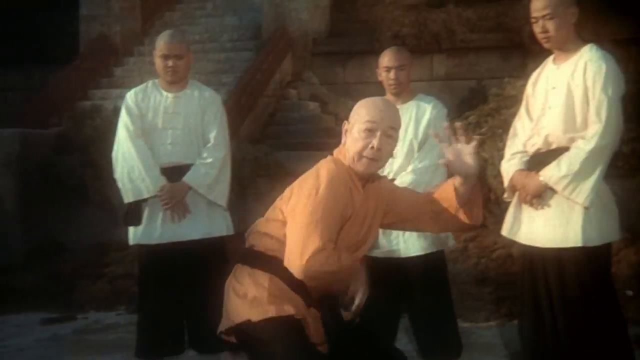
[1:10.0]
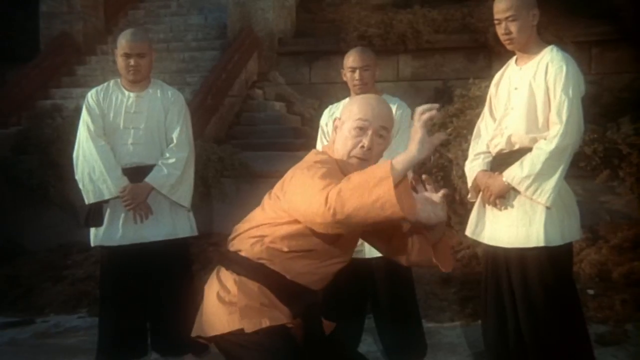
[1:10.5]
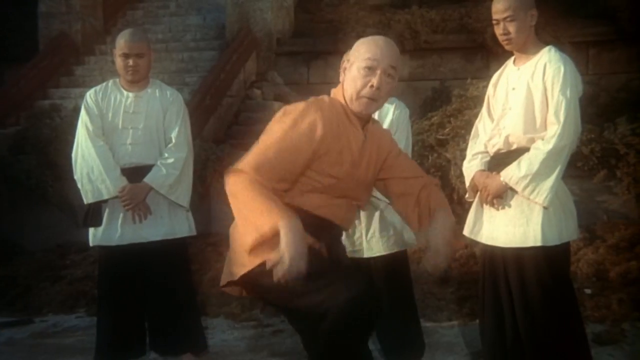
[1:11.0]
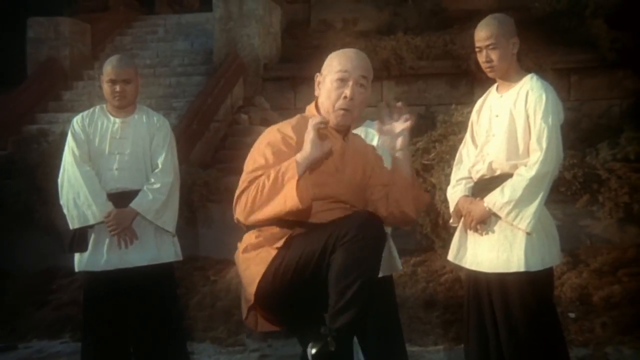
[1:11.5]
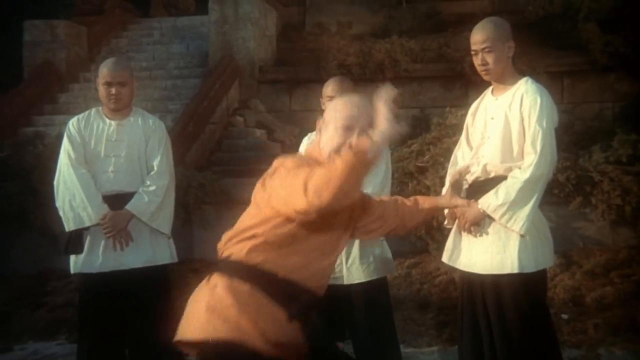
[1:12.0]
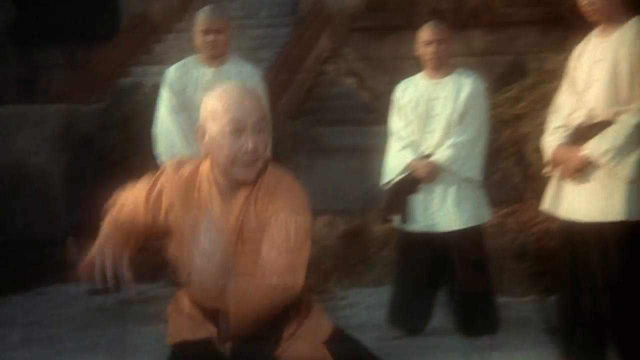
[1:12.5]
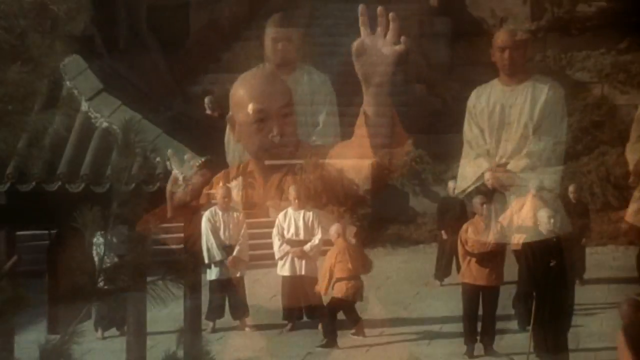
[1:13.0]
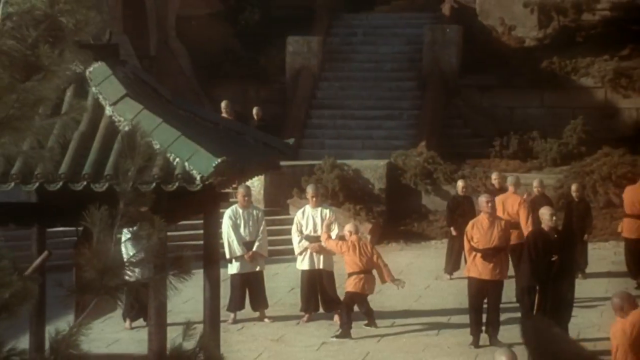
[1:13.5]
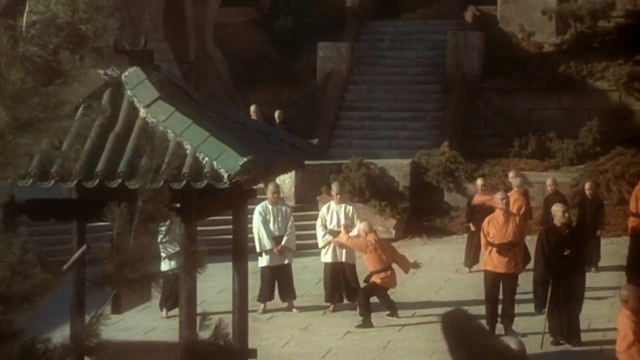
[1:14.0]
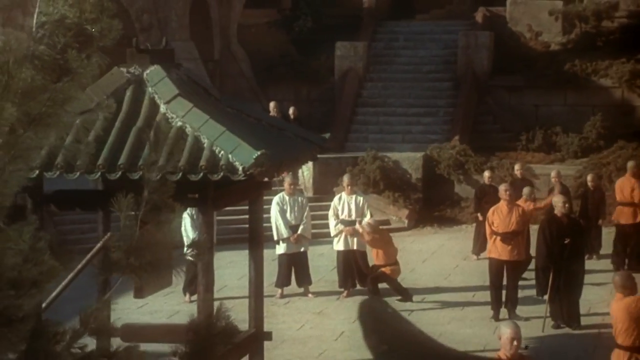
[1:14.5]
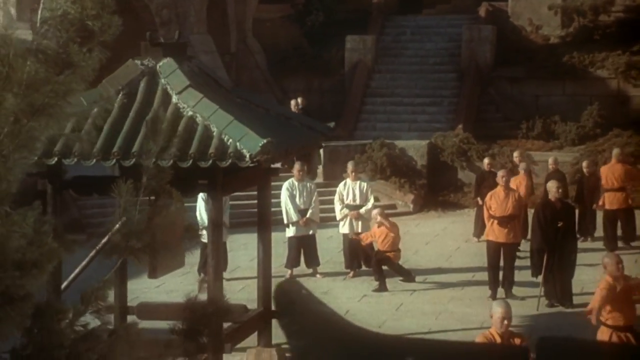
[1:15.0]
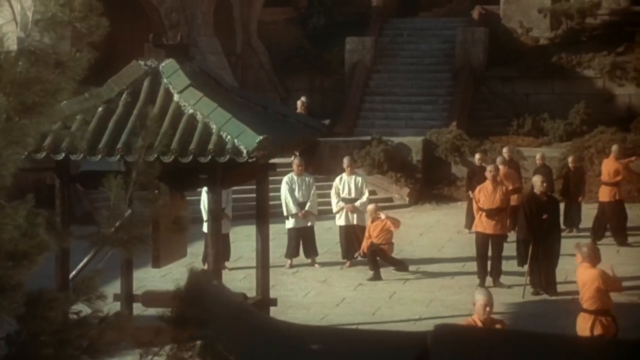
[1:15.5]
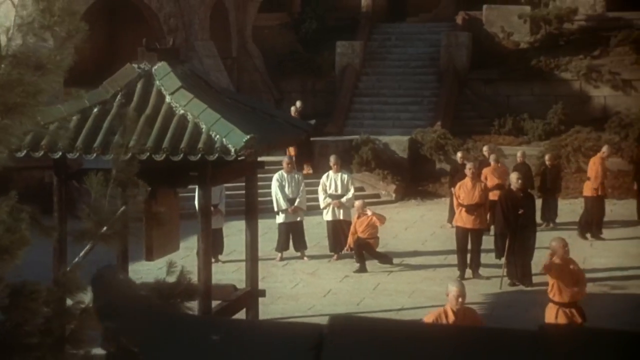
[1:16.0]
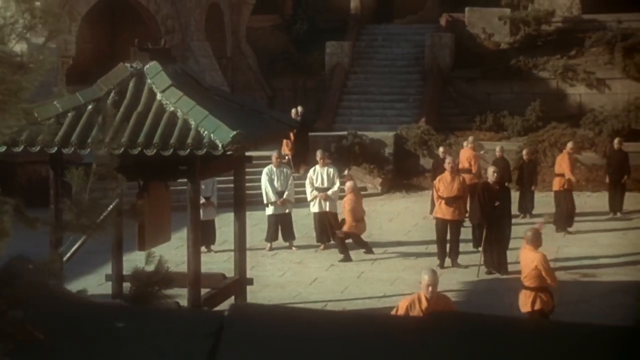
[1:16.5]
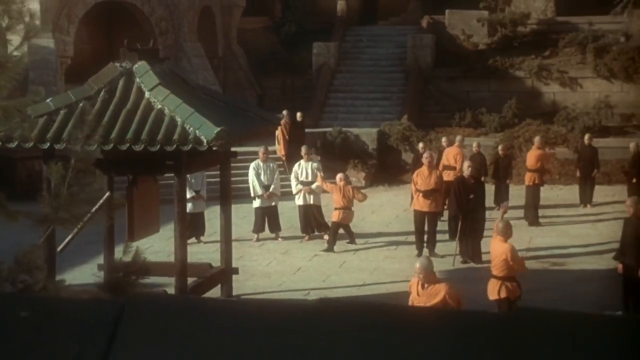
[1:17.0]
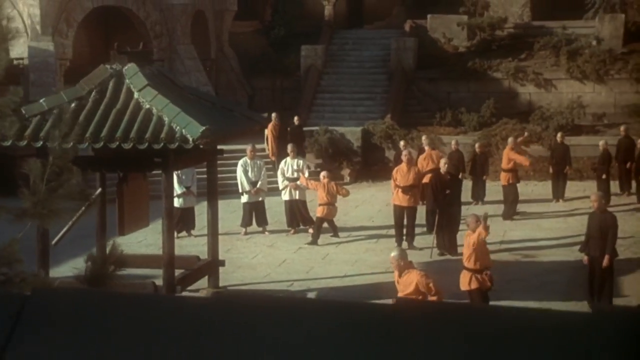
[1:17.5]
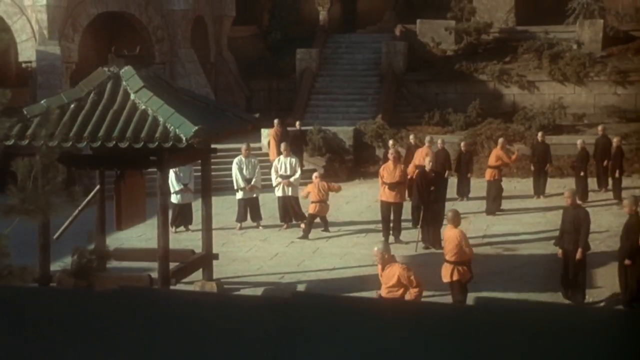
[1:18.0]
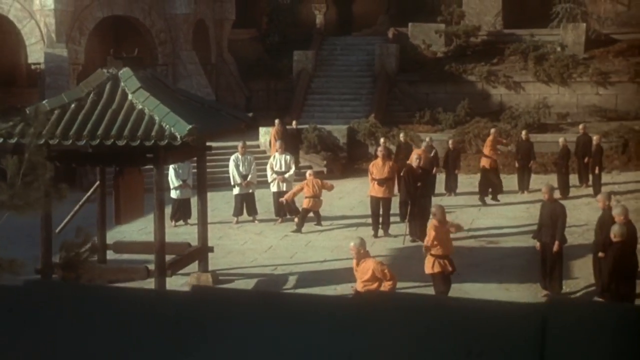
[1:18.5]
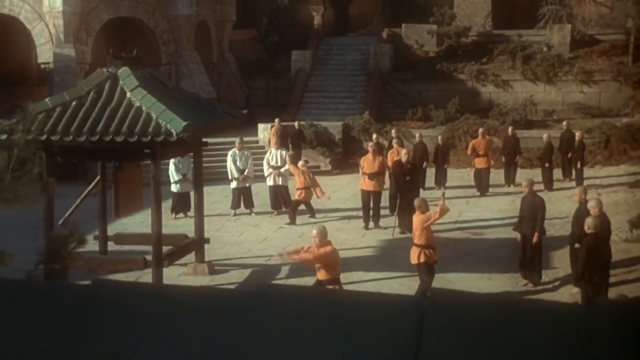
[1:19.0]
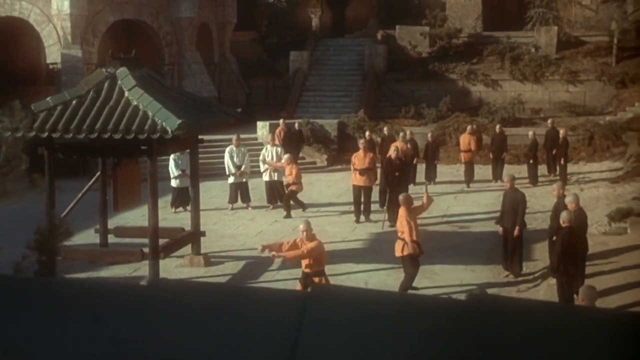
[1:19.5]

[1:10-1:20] A monk, clearly older than the others, does moves with his body leaning forward, while three younger monks behind him observe his movements. He wears a black belt and makes movements with his fingers, maybe imitating nails or animals. He lifts his legs and hands, holding specific postures that may help him move more easily or prepare his body for more exercise. The view then zooms out to show most of the monks practicing. On the left and right, some monks wearing other clothes or colors watch the monks working out, and in the background some of the monks move uniformly.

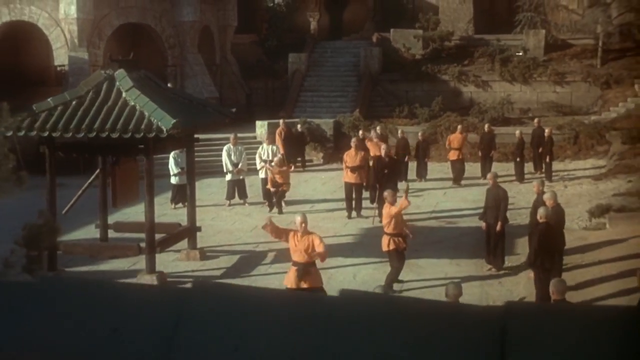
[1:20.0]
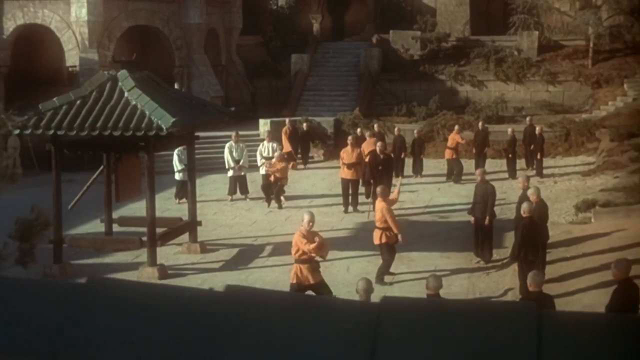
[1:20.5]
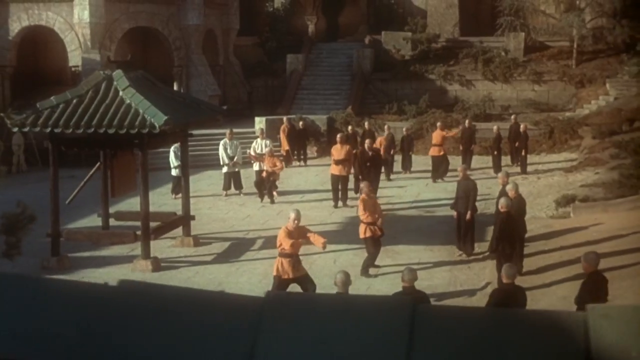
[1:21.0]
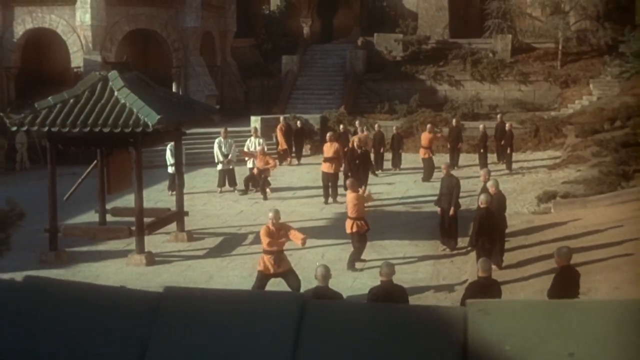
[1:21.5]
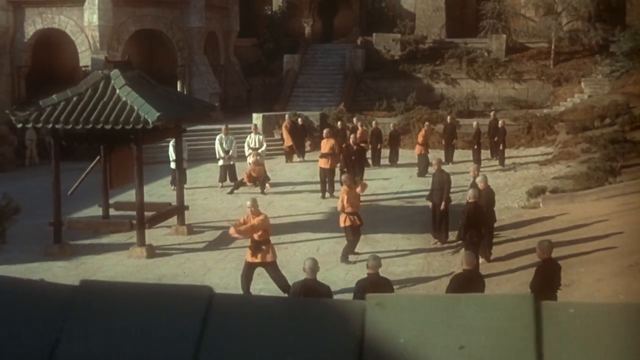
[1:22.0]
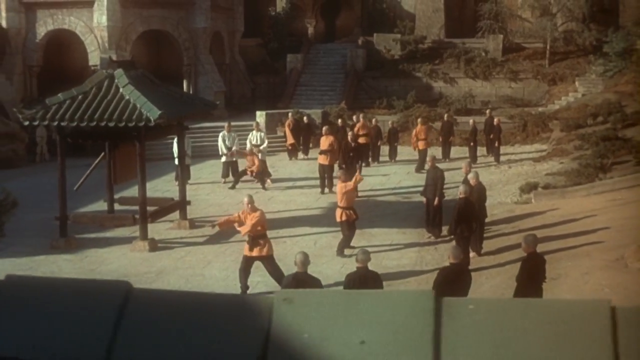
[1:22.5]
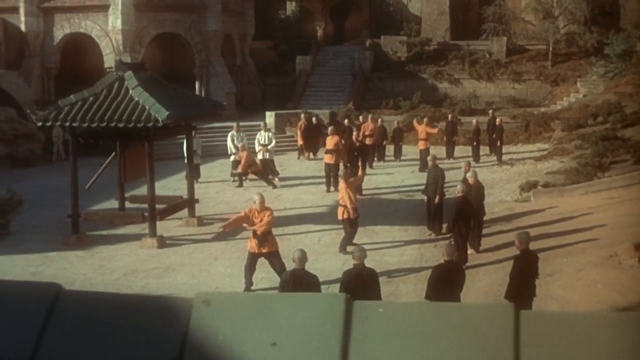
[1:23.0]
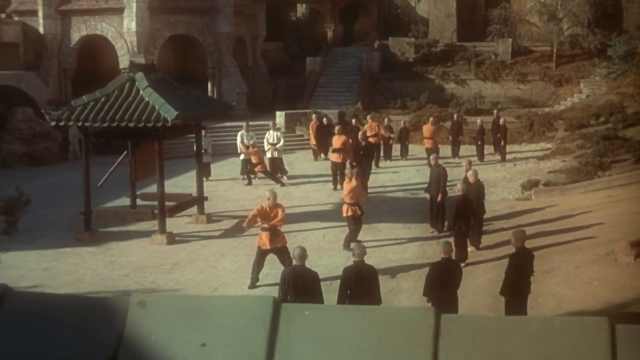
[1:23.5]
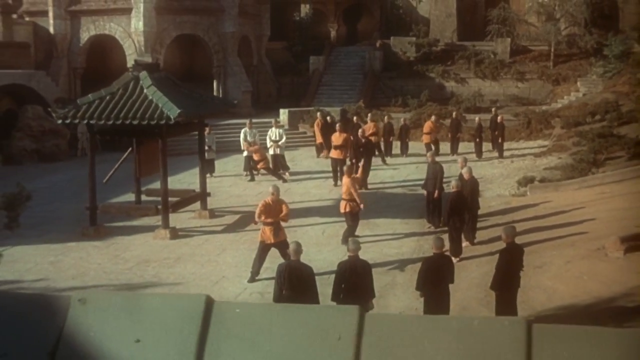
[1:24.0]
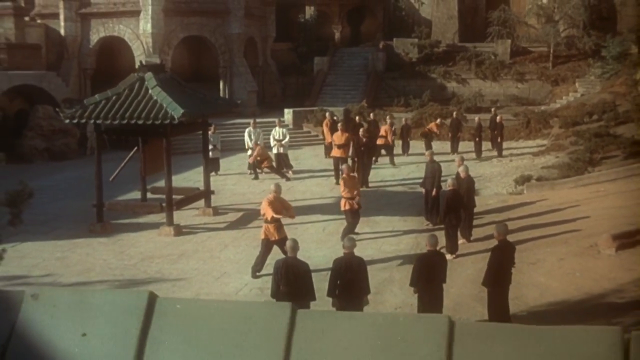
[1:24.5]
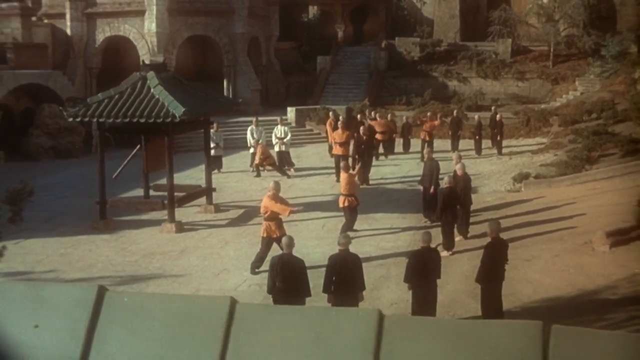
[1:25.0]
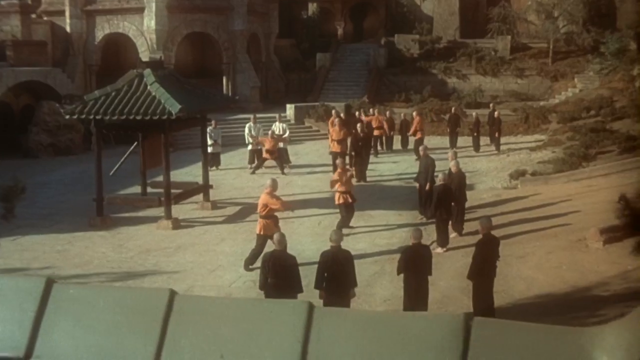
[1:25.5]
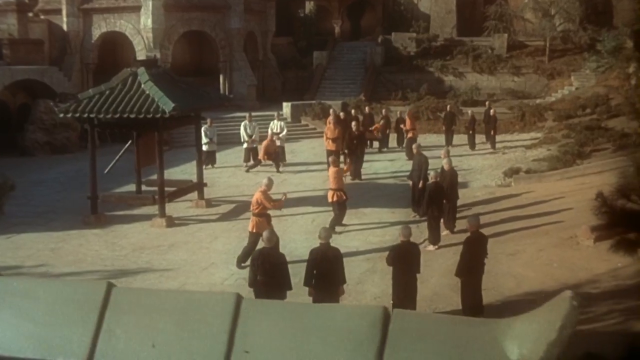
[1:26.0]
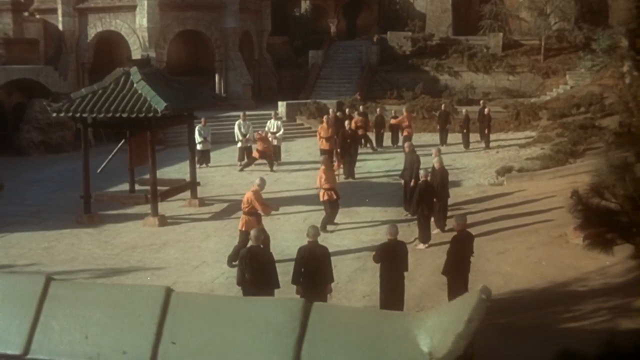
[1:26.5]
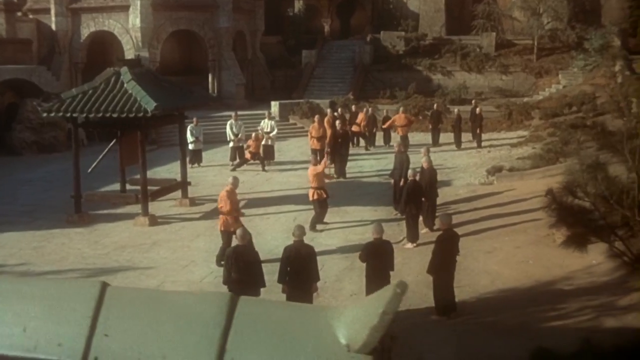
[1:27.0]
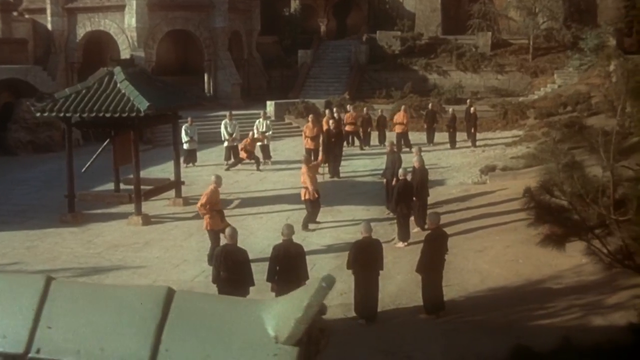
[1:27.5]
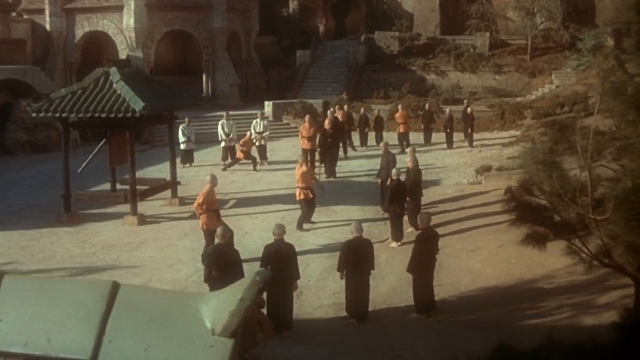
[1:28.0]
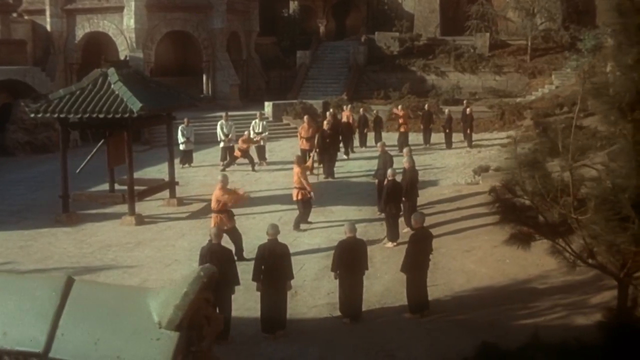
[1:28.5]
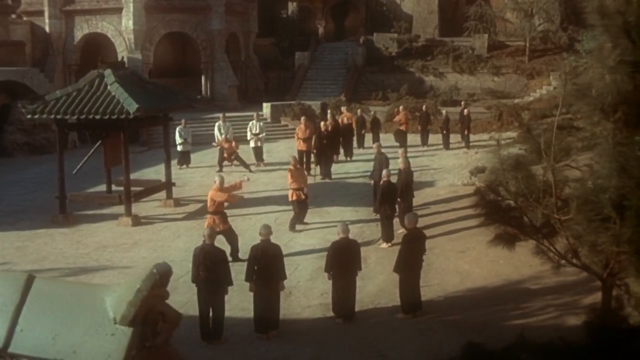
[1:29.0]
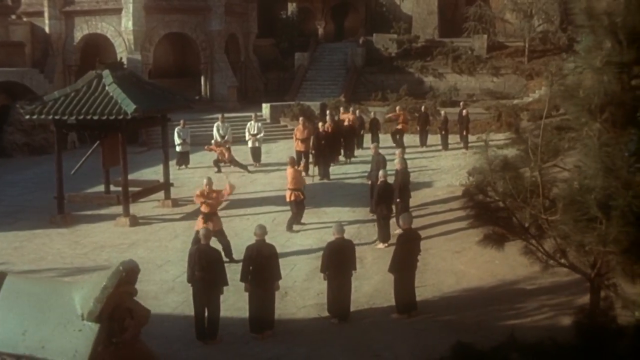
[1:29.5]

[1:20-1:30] A wider view shows the area. On the left is a small hut with wooden benches where the monks can probably sit. In the upper left corner is a stone building decorated with stones arranged in a semicircular fashion, apparently indicating gates. Stairs are visible in the background, continuing even further back, and more stairs come from the upper right corner. The monks practice in the open area. There are trees, and bushes right behind the monks where they are not practicing, with quite a bit of fauna in the area. On the left is some kind of spot from which the training can probably be viewed.